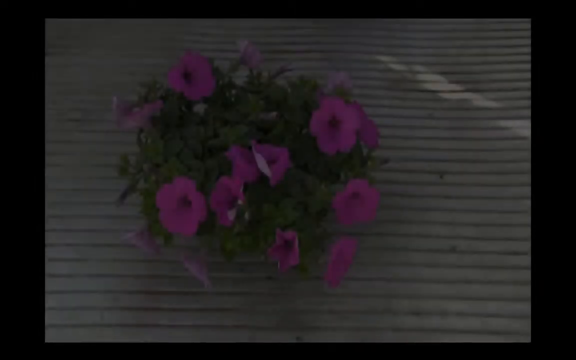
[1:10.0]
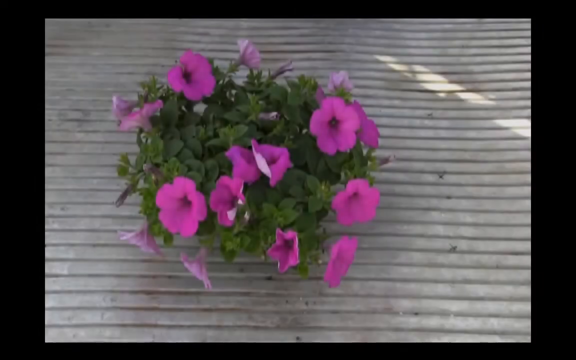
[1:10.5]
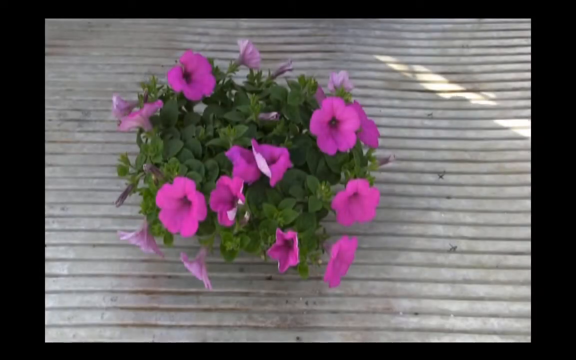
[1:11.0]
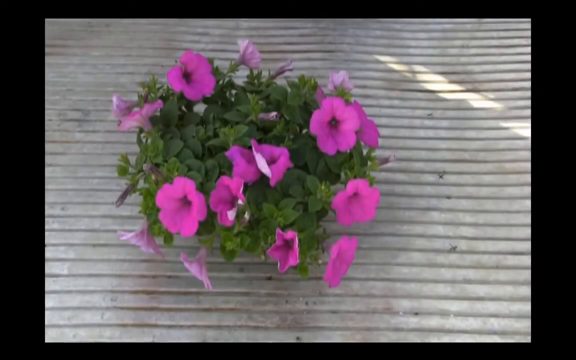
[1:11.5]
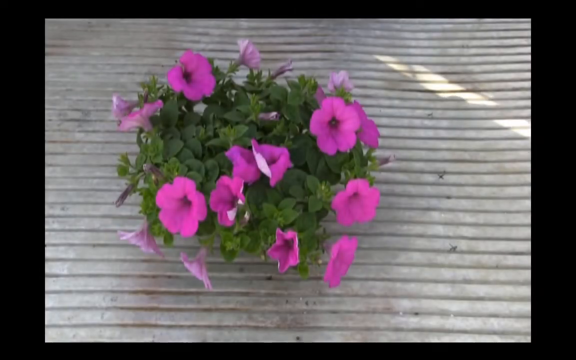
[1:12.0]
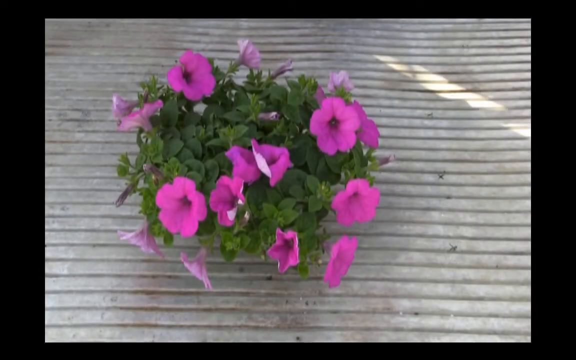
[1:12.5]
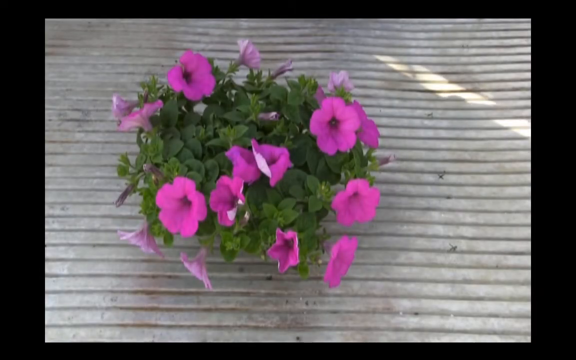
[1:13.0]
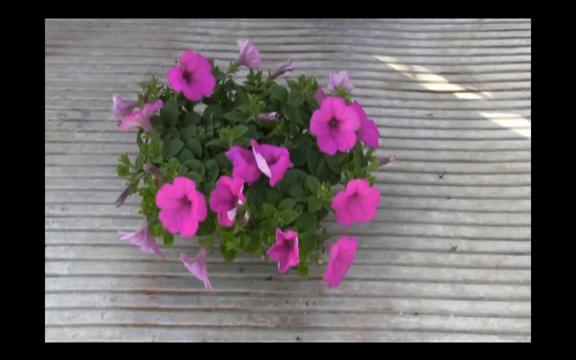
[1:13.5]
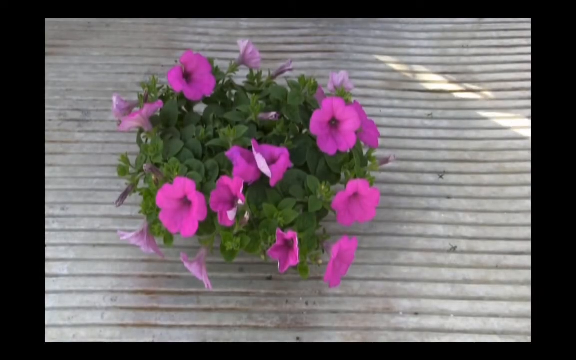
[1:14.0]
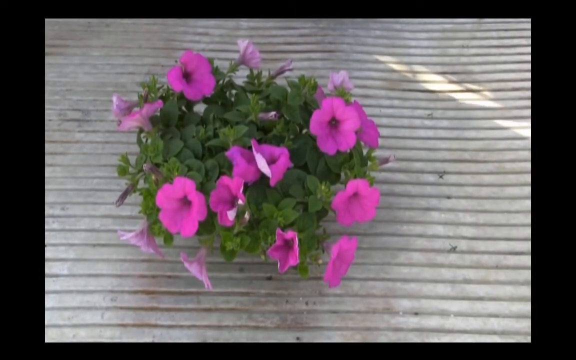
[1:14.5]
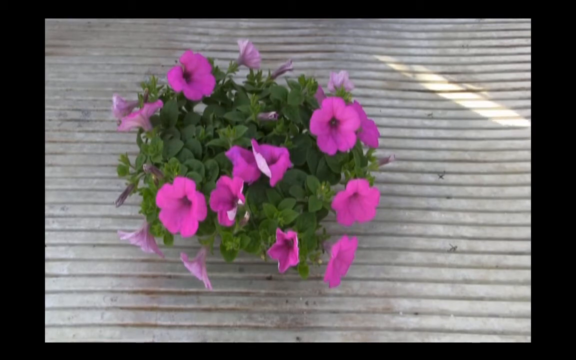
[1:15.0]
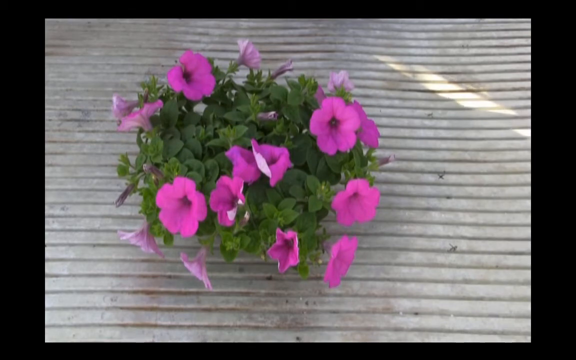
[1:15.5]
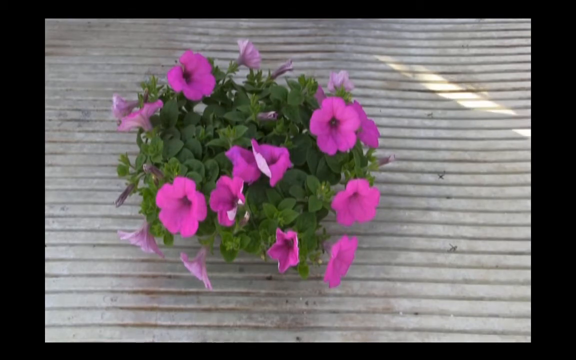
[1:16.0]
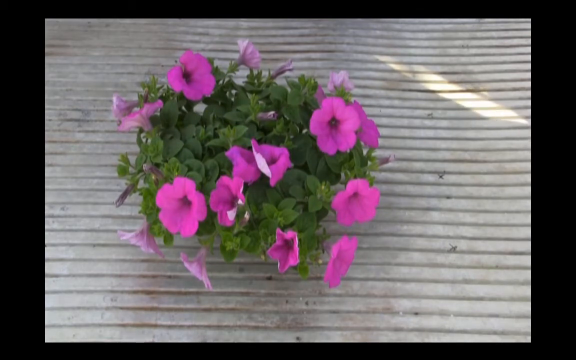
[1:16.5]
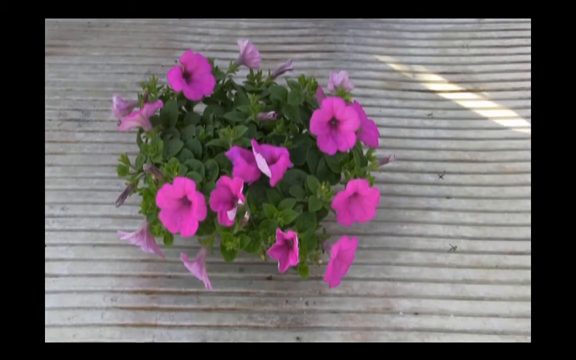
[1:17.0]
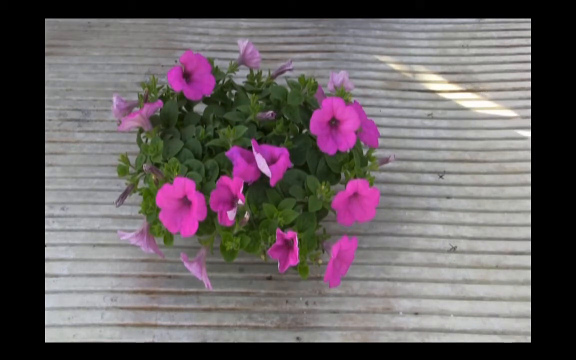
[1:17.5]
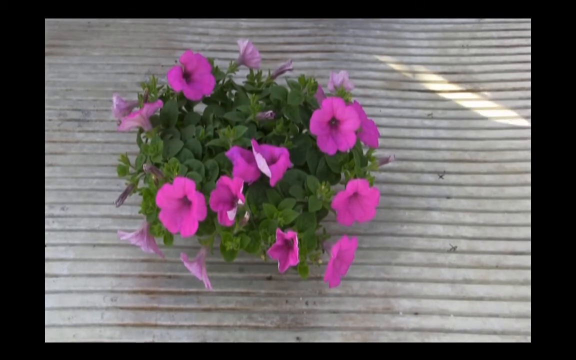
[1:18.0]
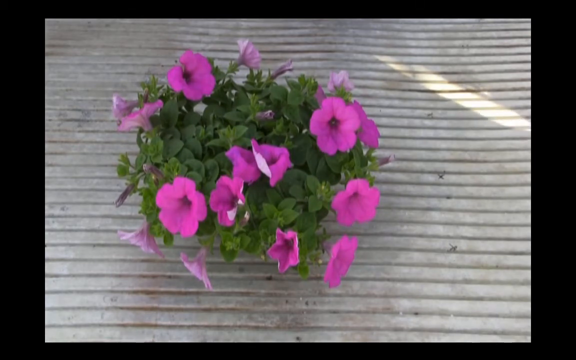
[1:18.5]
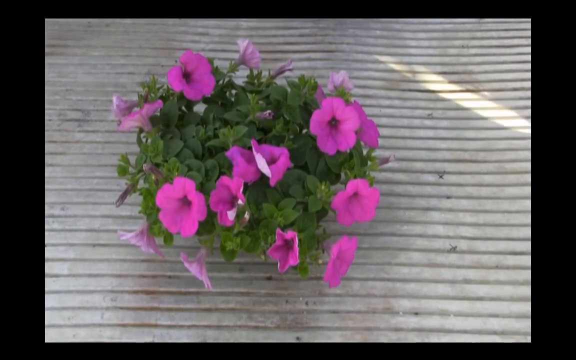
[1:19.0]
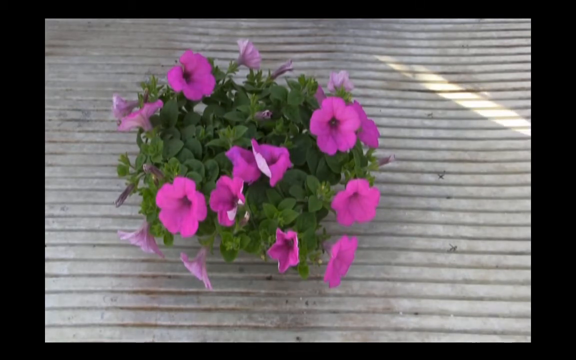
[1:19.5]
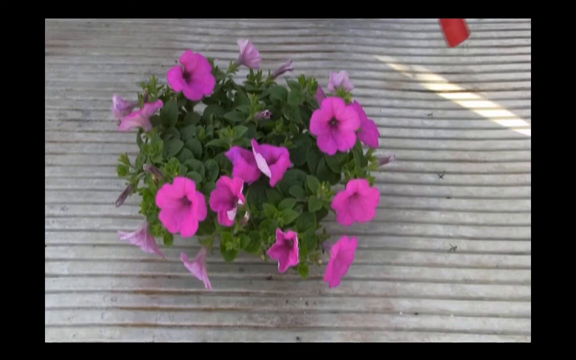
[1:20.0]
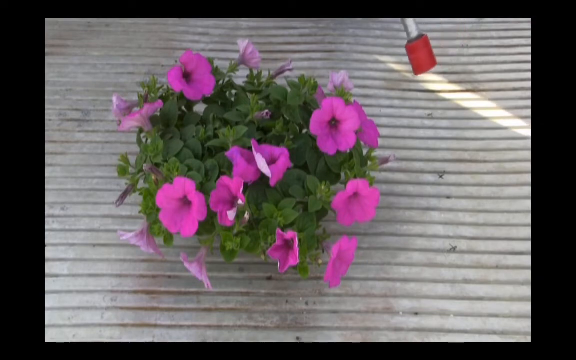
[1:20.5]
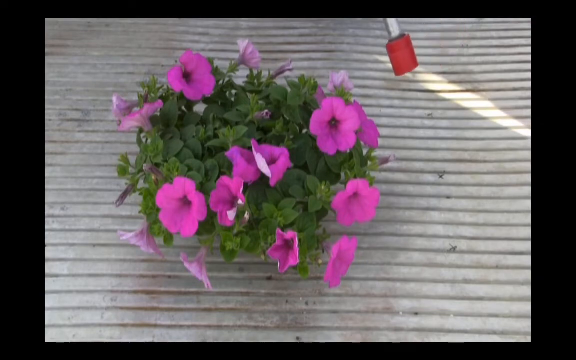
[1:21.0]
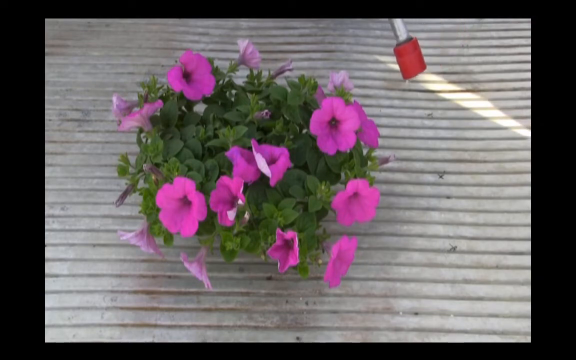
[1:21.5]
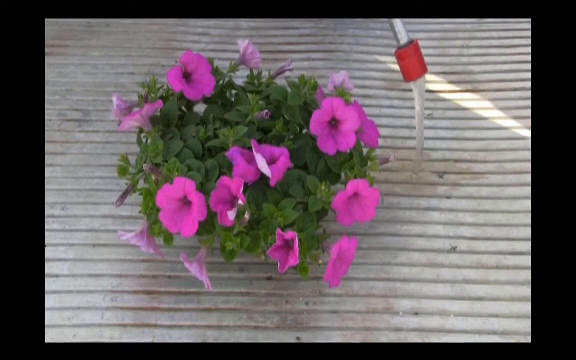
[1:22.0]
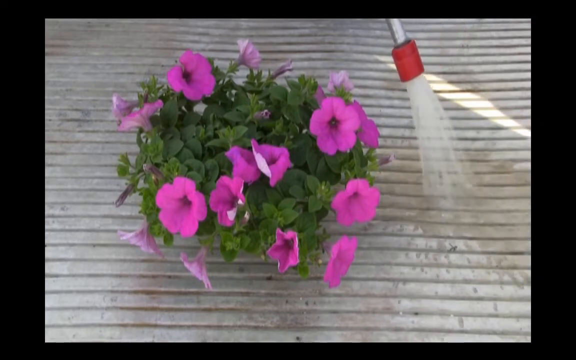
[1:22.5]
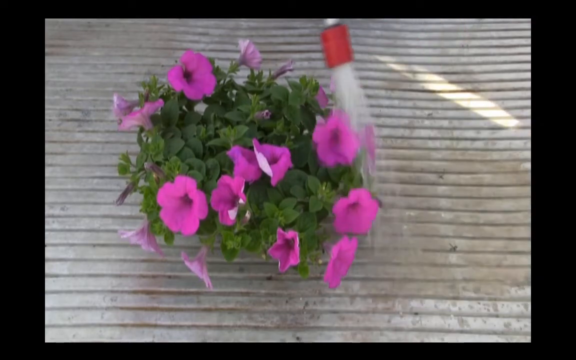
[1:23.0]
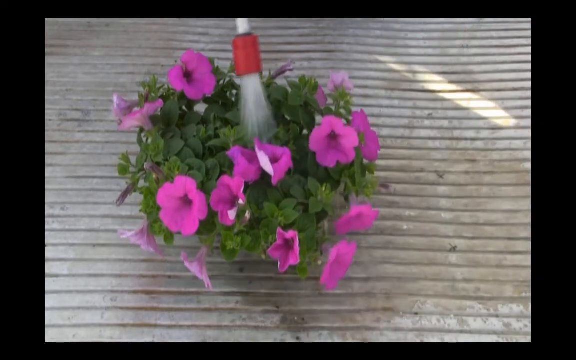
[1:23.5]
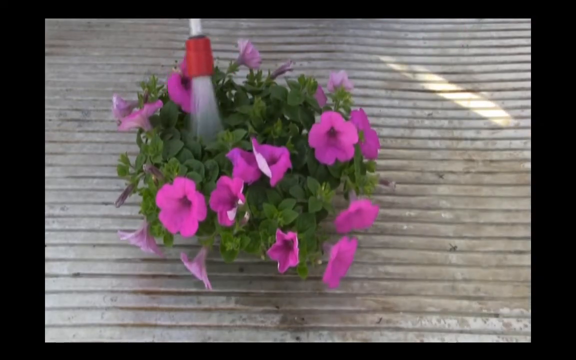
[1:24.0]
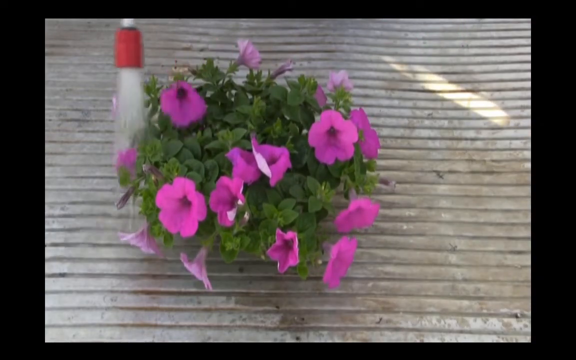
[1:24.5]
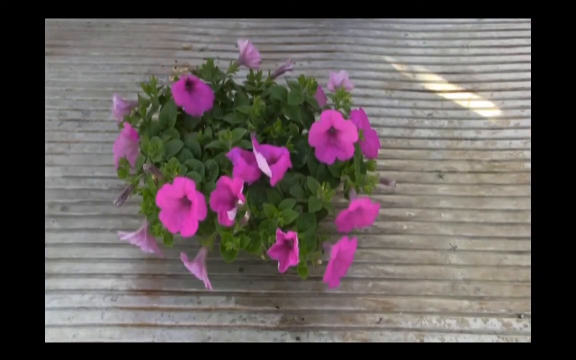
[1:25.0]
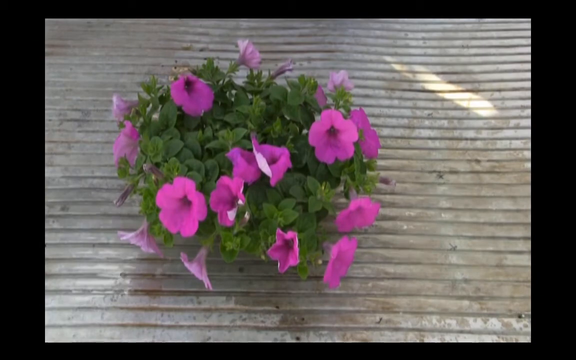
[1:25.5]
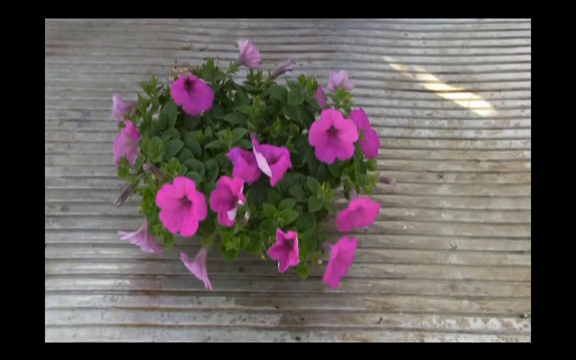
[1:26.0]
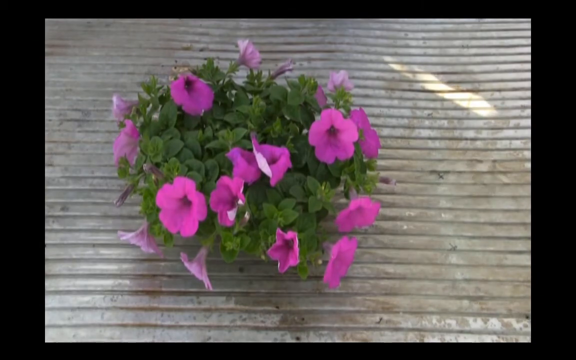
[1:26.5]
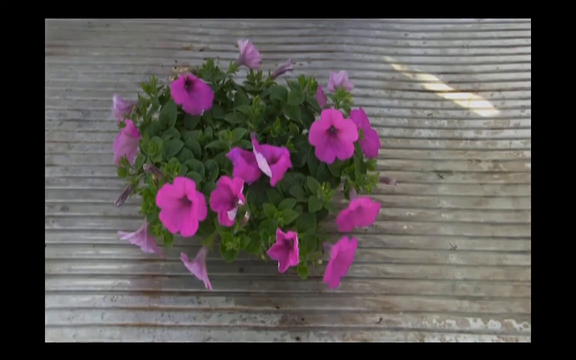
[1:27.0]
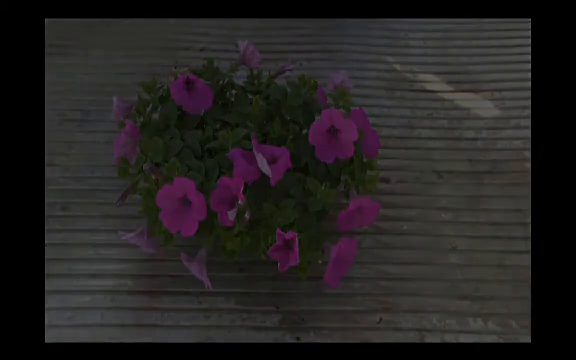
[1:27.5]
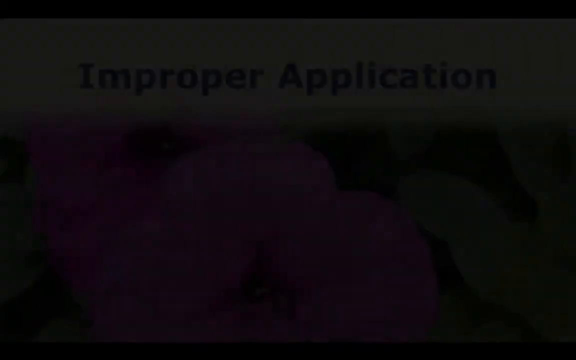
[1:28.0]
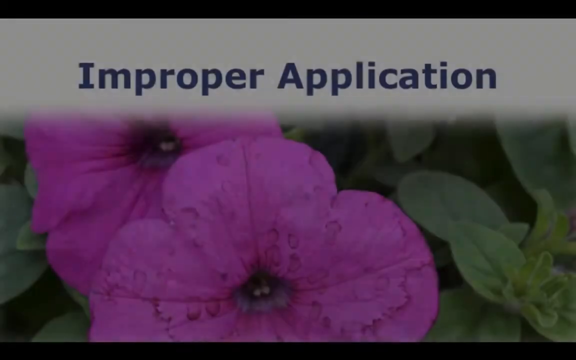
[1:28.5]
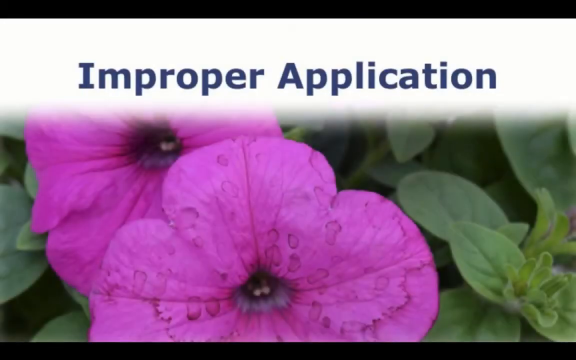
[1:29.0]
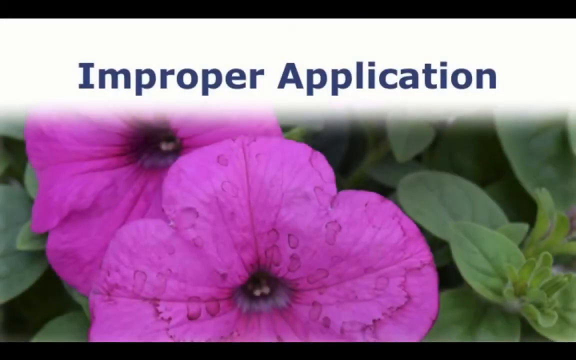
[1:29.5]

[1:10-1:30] A plant with mostly green leaves and some purple leaves, the green ones in the majority, is placed on top of corrugated iron and looks like it is in the shade. Someone brings a watering pipe, silver on its upper part with a red cap, and sprinkles water over the plant from right to left. A heading then appears, "Improper Application," written in blue on a white background with the first letter capitalized. In the background are two flowers with giant pink leaves and white centers, covered with water droplets, surrounded by other plants or leaves that are green.